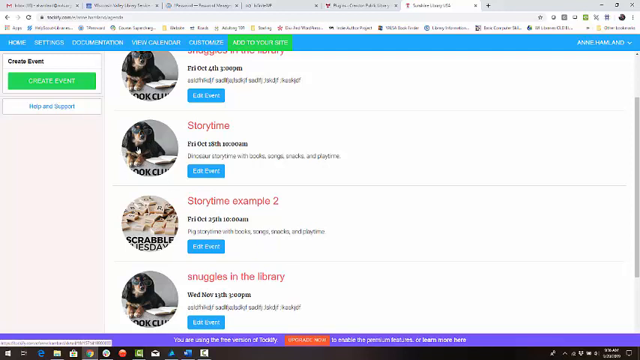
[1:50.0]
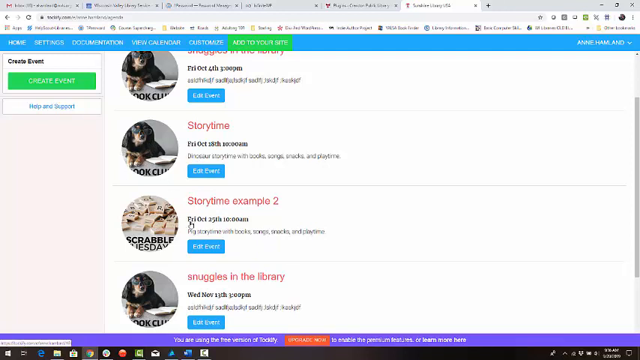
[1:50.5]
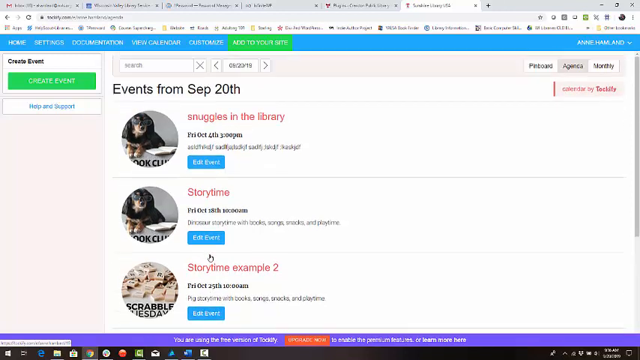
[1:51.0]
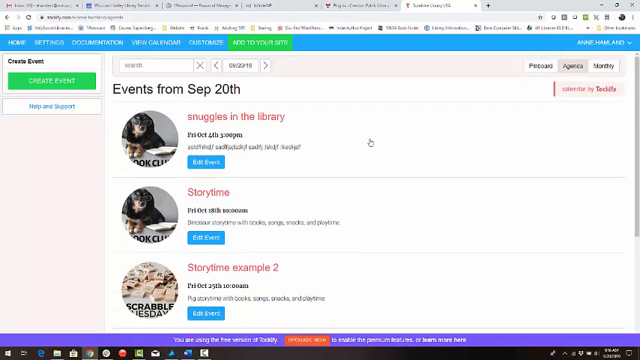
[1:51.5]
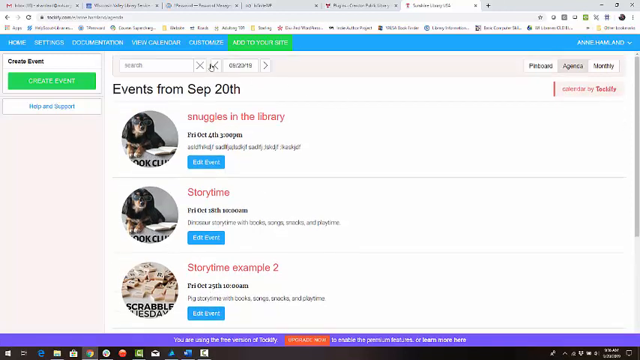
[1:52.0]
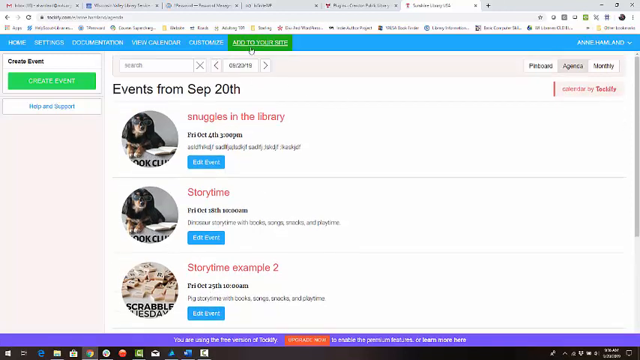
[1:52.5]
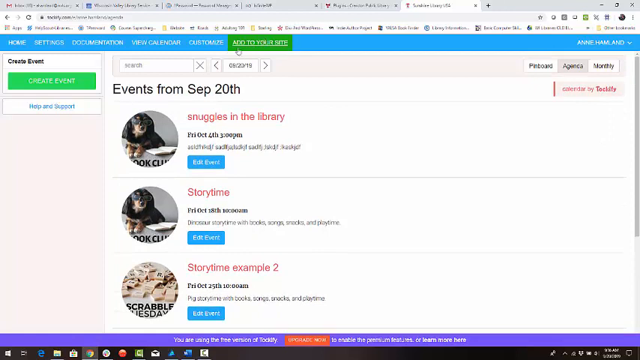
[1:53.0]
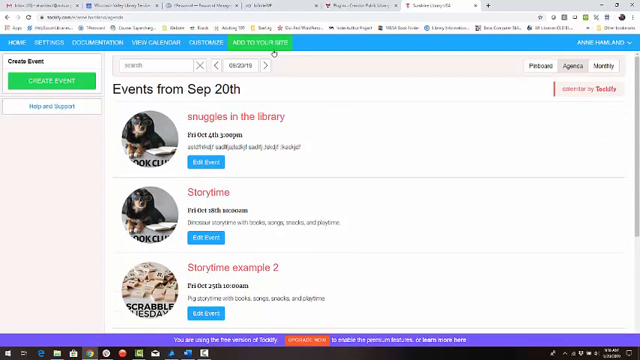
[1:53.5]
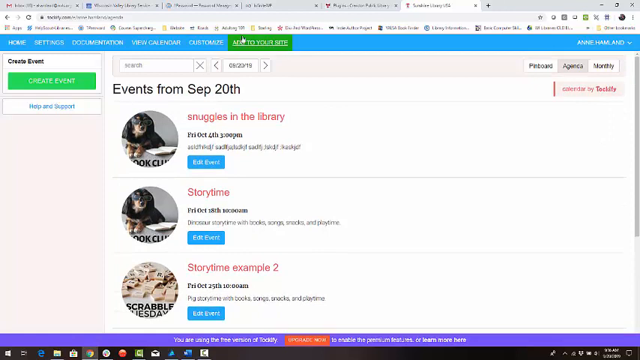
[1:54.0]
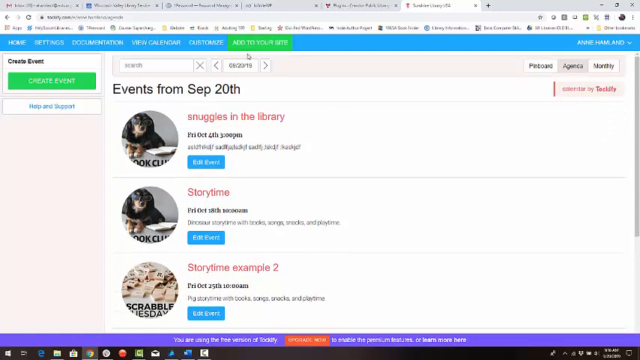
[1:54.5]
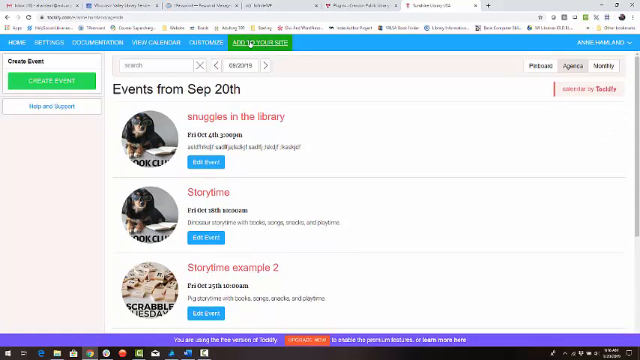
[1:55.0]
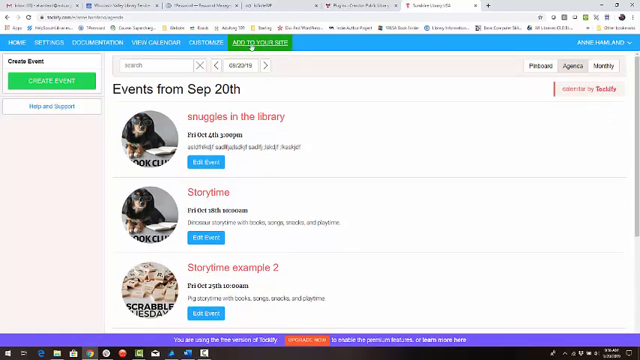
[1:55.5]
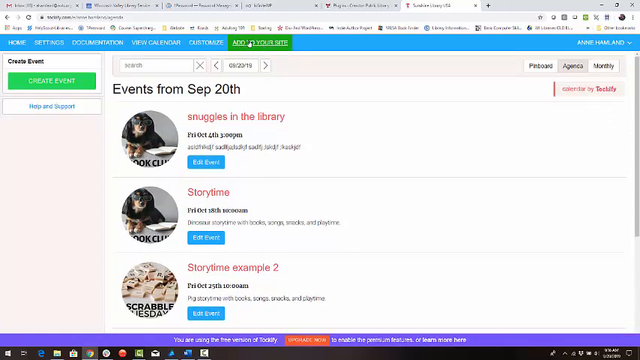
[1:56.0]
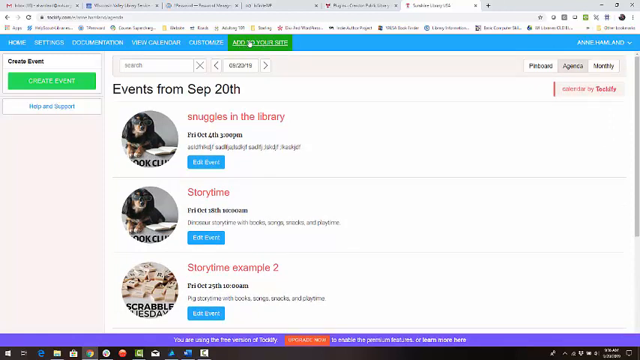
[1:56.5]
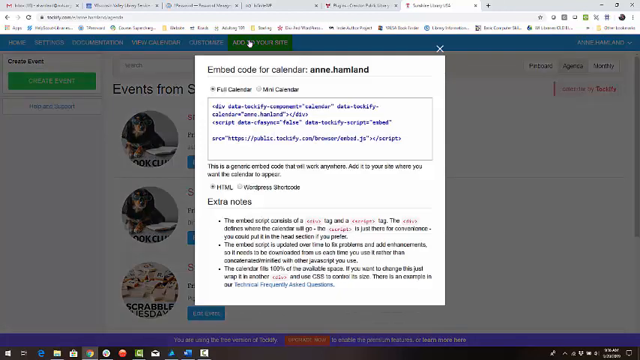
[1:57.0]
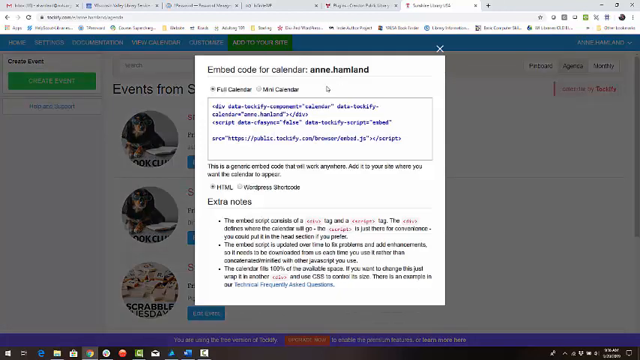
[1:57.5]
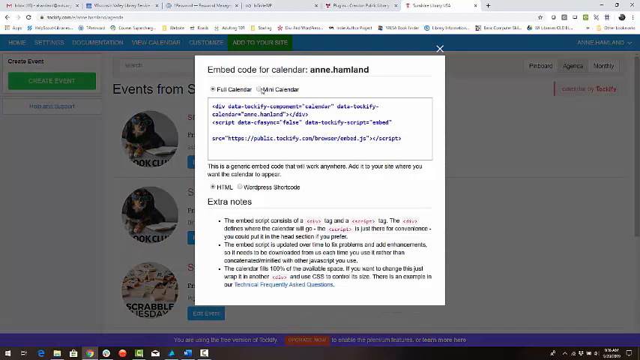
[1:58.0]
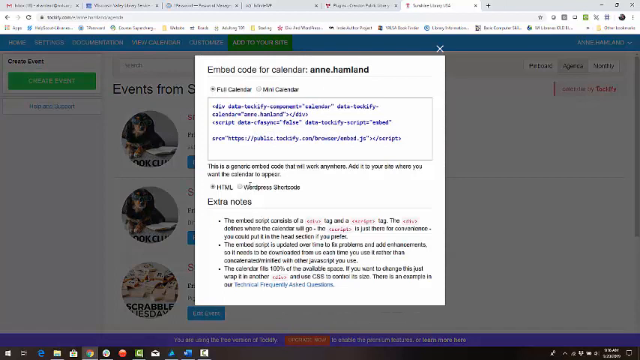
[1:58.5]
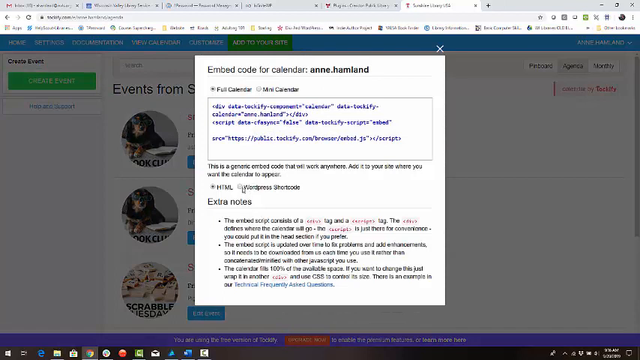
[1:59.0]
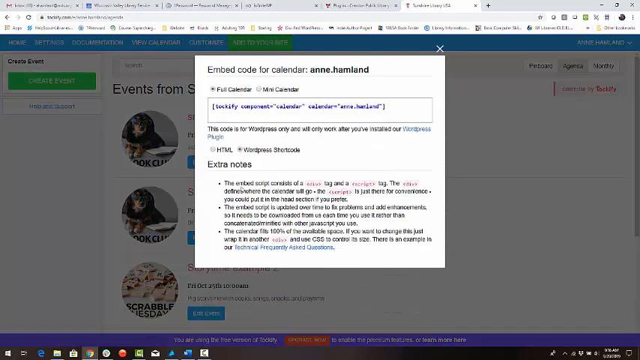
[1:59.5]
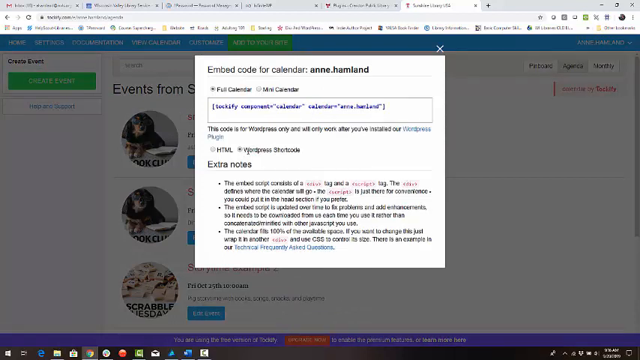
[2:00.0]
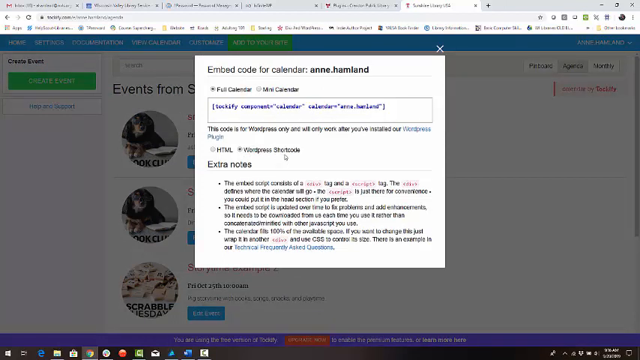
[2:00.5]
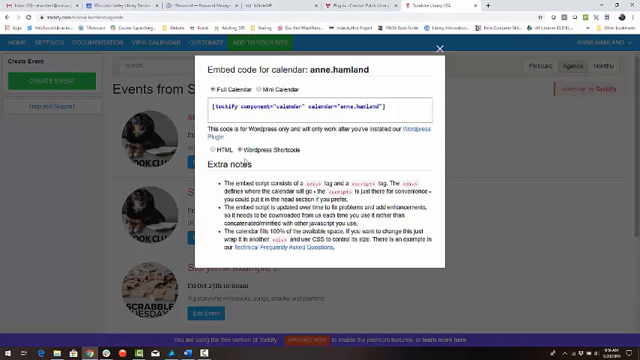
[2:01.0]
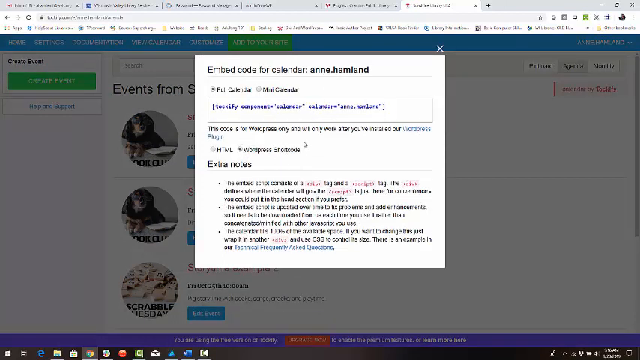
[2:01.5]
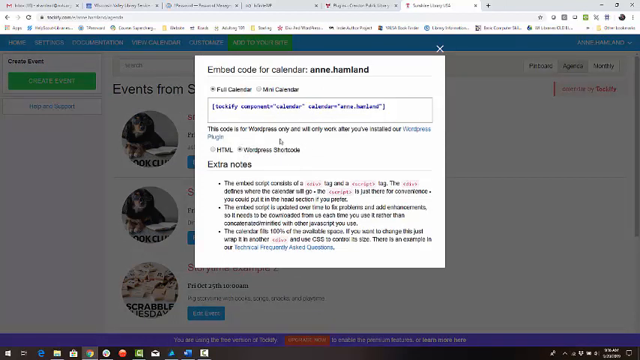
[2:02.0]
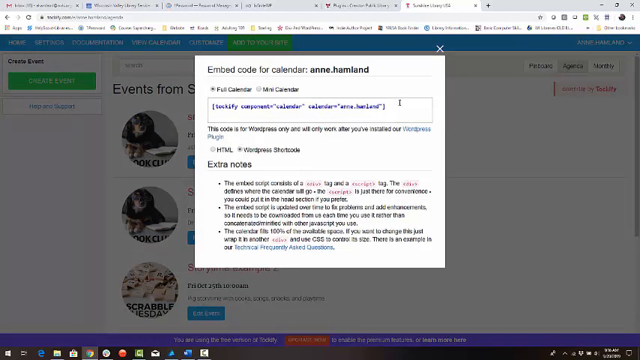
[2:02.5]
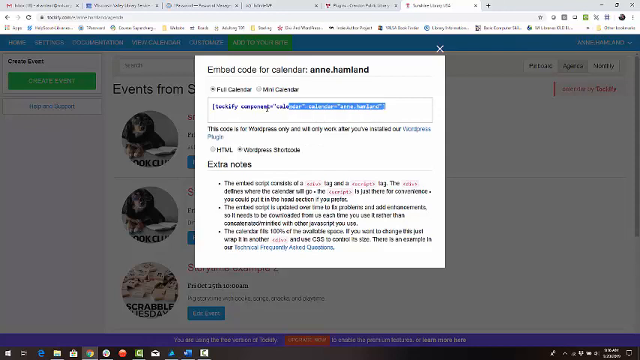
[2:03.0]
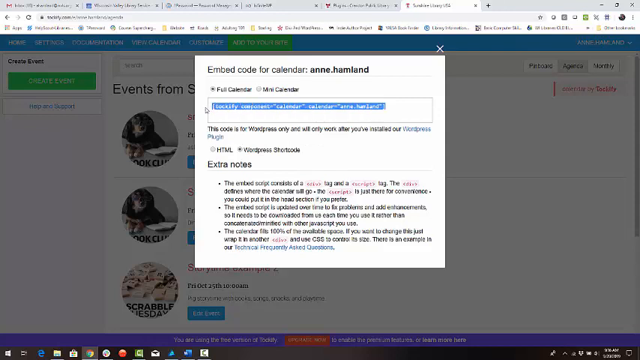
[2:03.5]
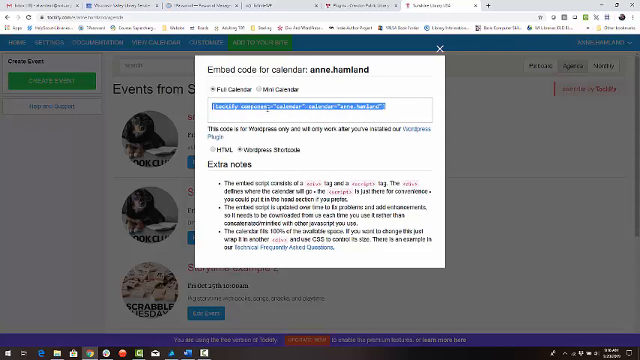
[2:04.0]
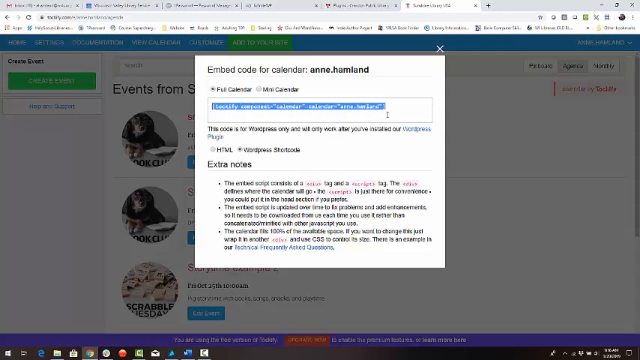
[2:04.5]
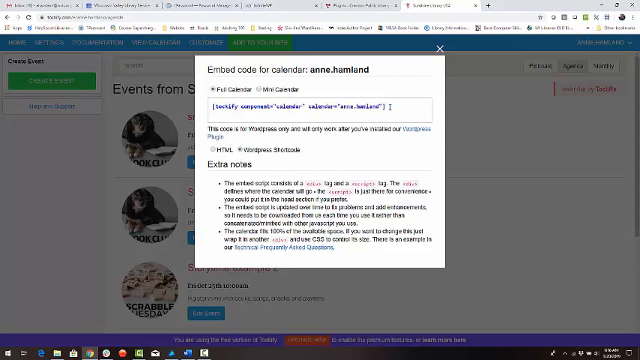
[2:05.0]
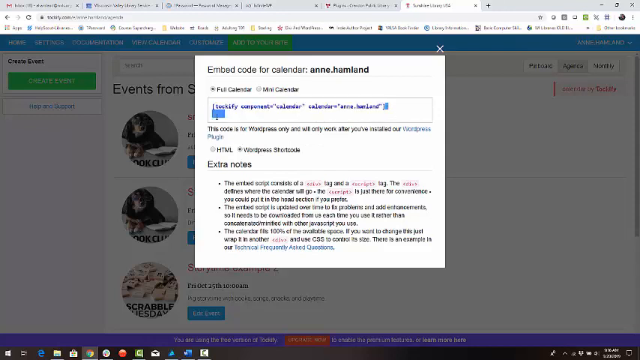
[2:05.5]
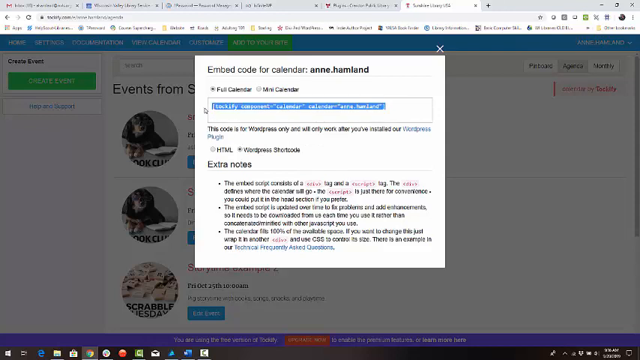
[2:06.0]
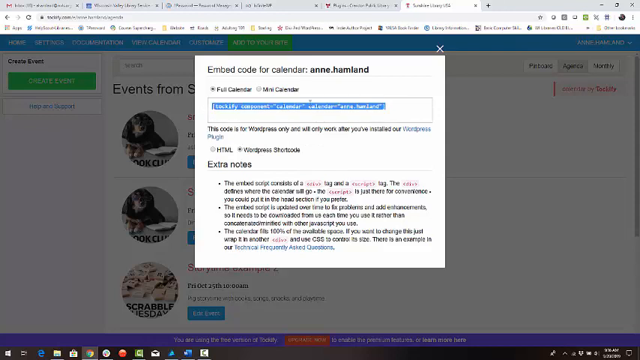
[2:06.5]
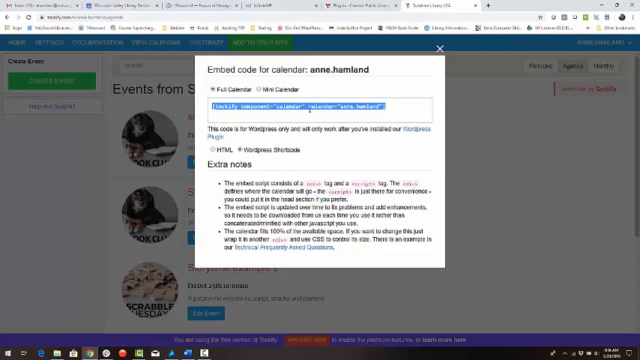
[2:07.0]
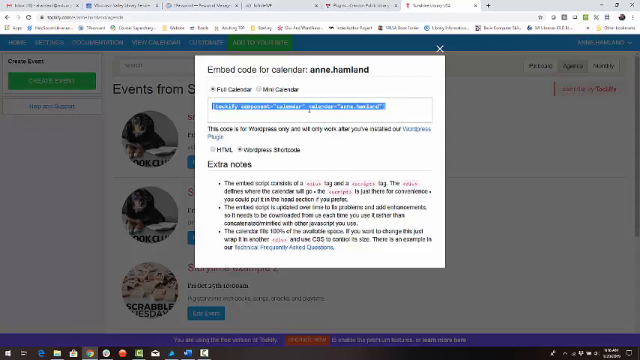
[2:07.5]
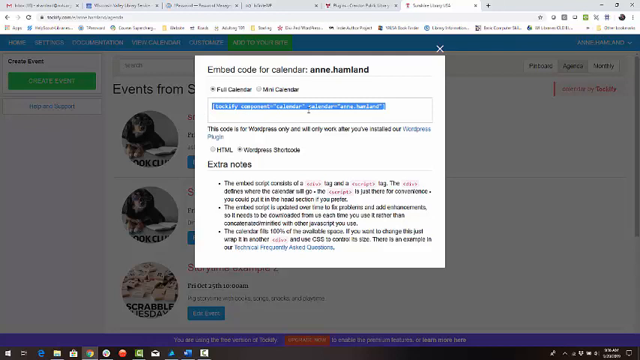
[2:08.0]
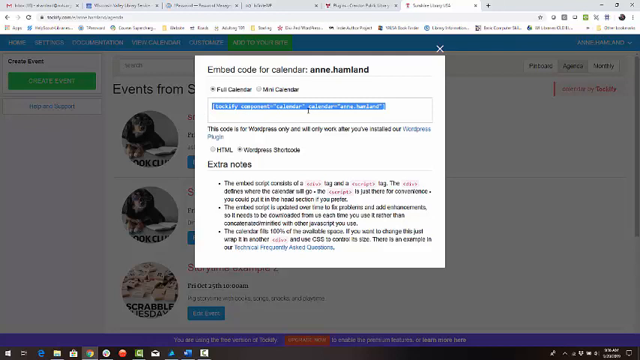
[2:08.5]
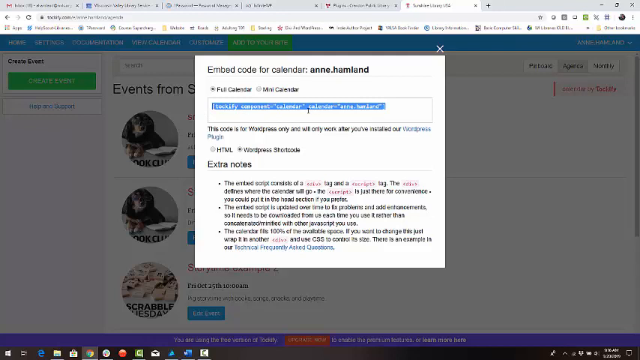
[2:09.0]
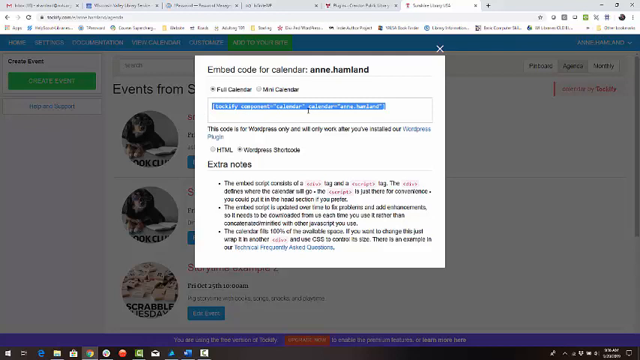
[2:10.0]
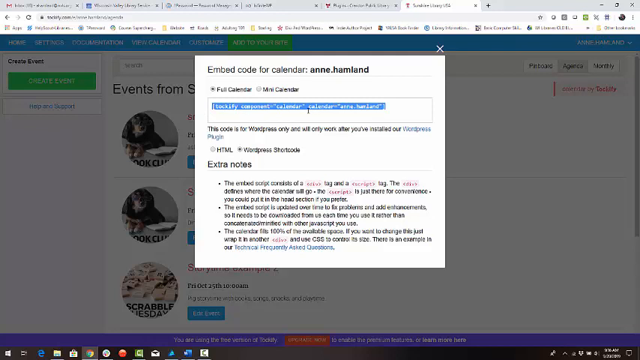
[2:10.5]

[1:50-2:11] A website shows the header "events from September 20th." Underneath are pictures that seem like avatars, and to the right is red text, with two buttons underneath for each option. At the top is a blue taskbar with part of it highlighted in green. The cursor is over the highlighted part, and the user seems to circle around it before clicking. A smaller window appears with black text reading "embed code for calendar," and underneath is a lot of black text along with what looks like code in purple. The user seems to highlight the code, and the highlight is now blue. They continue hovering the cursor over it.